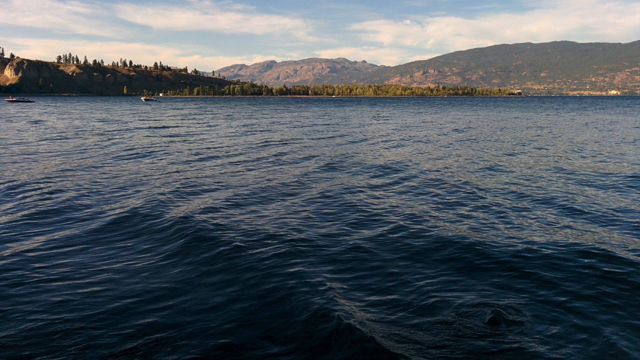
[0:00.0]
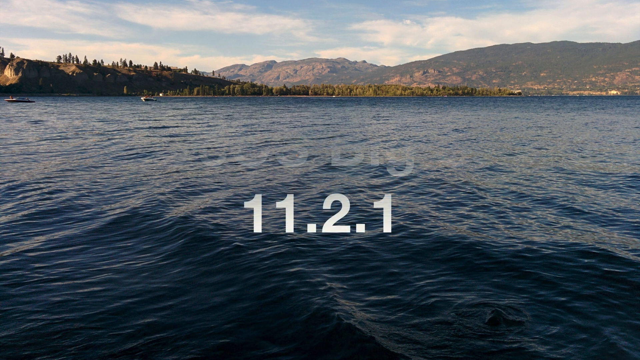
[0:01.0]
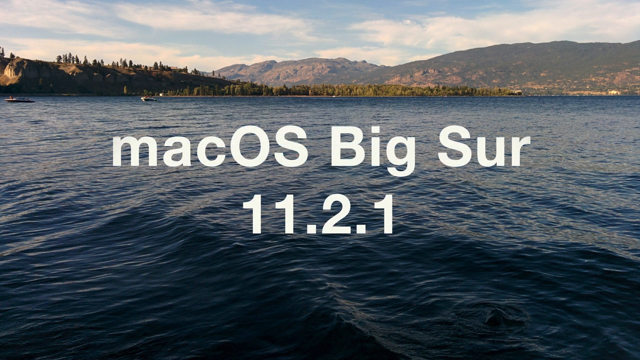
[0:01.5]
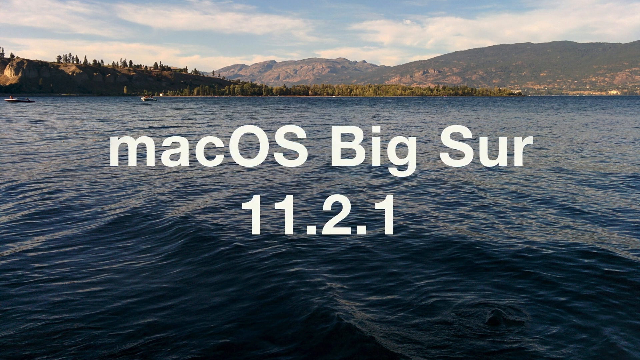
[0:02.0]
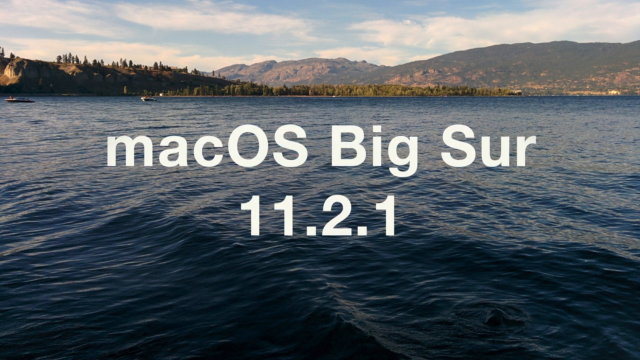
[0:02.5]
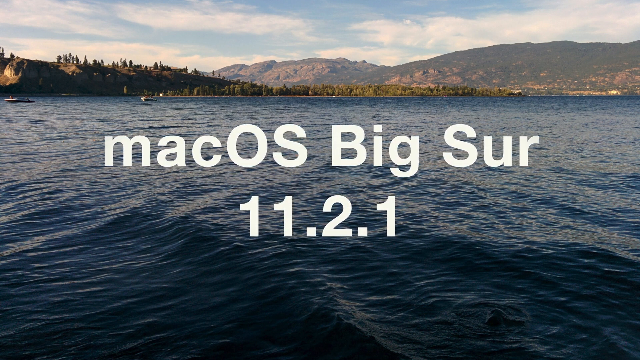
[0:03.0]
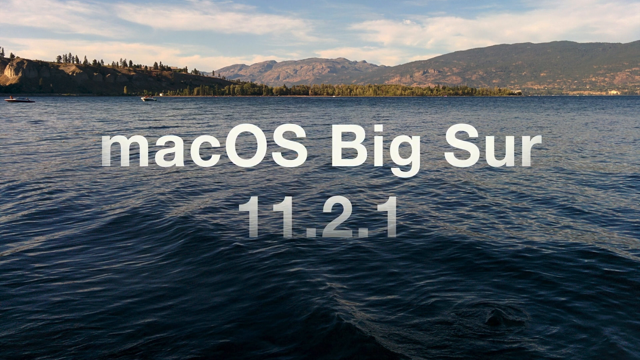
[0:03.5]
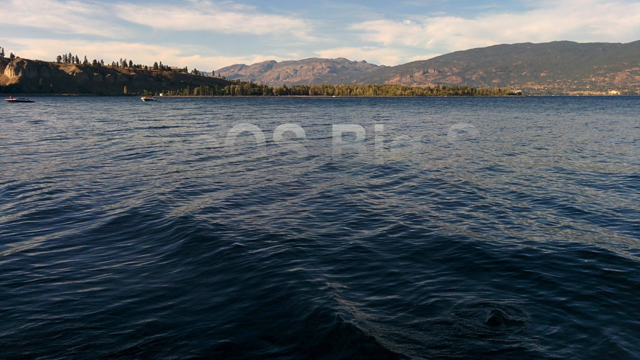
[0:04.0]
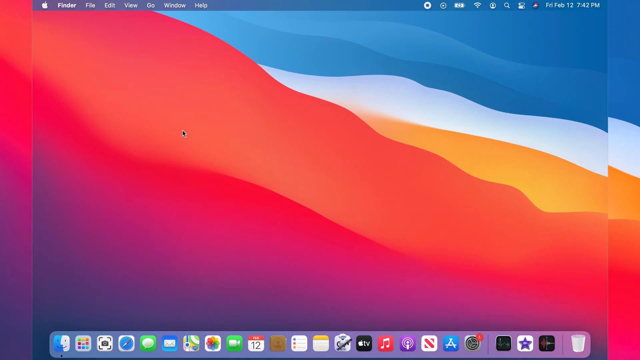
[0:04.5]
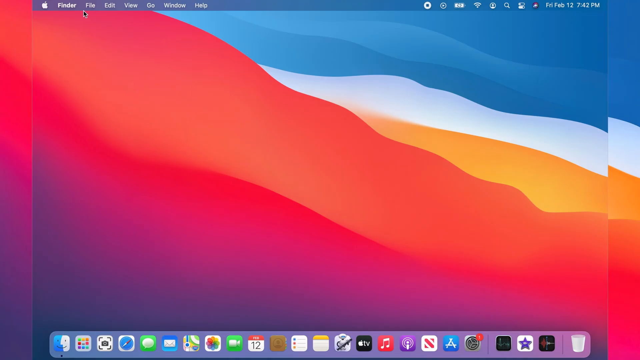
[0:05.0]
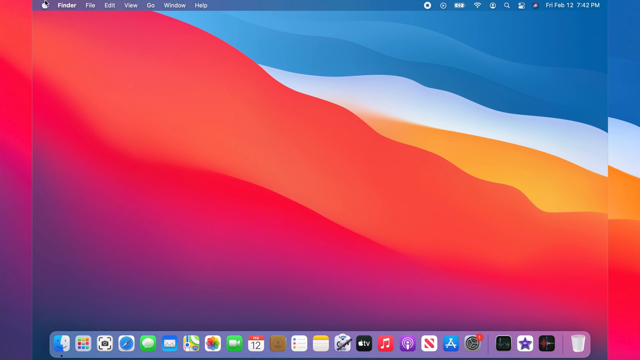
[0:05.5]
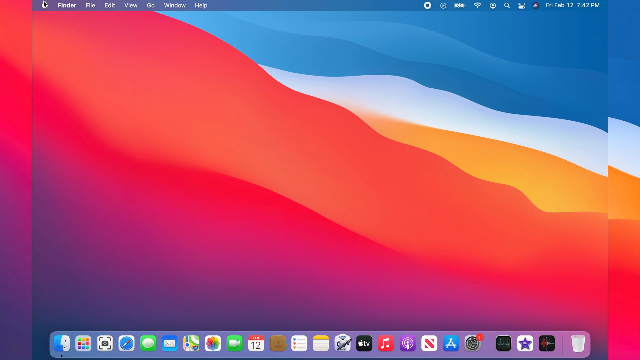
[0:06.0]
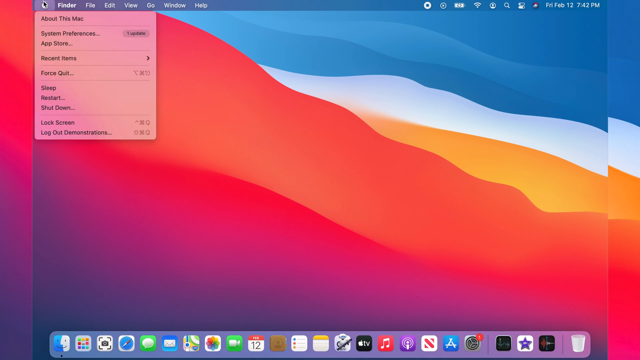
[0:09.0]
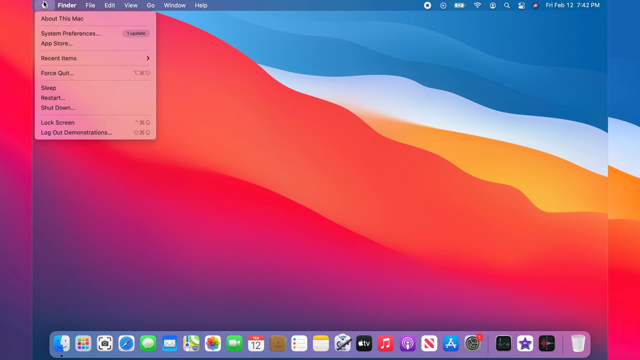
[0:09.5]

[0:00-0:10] The video opens on what looks like a lake or river, with blue water and the text "Mac OS Big Sur 11.2.1". It then changes to a red background, kind of a gradient with red, orange, yellow, white, and blue, and stays on that for a while. A screen opens on a computer, and the bottom panel, a toolbar on a Mac computer, is visible. He pushes a button and a menu appears listing about this Mac, system preferences, app store, recent items, force quit, sleep, restart, shut down, lock screen, and log out. There is a timer. The video shows a Mac computer screen.